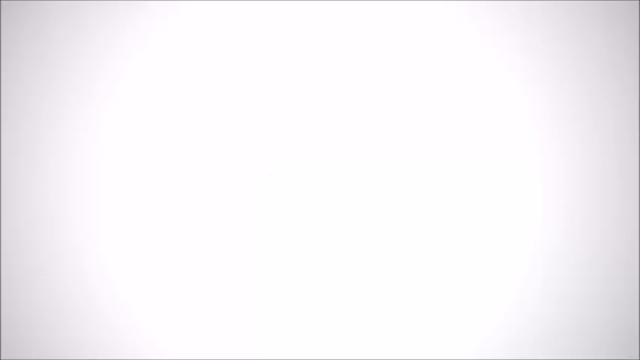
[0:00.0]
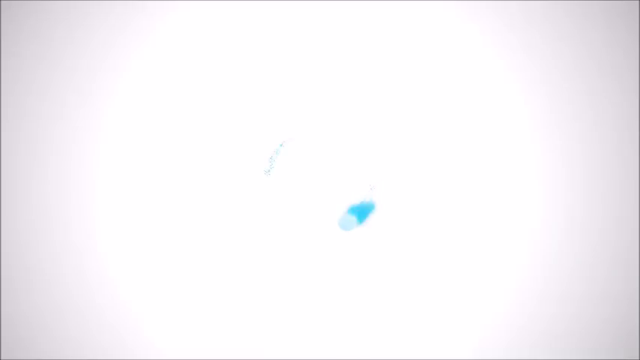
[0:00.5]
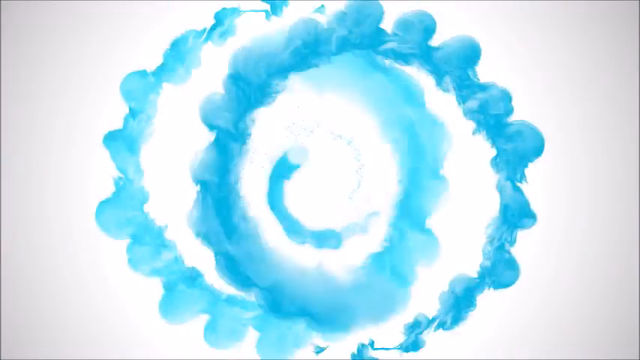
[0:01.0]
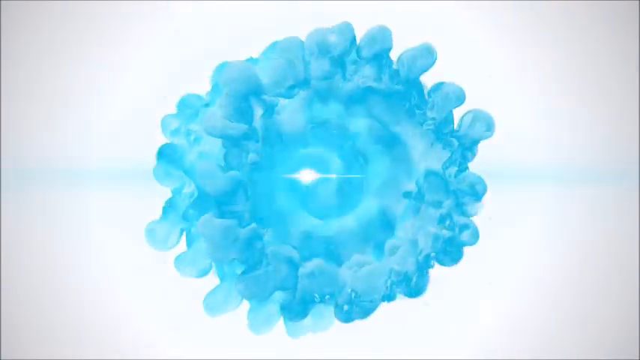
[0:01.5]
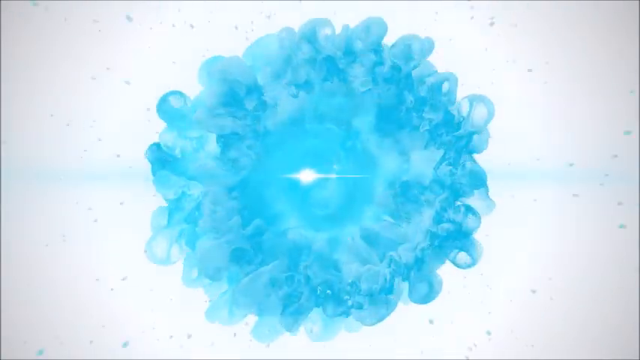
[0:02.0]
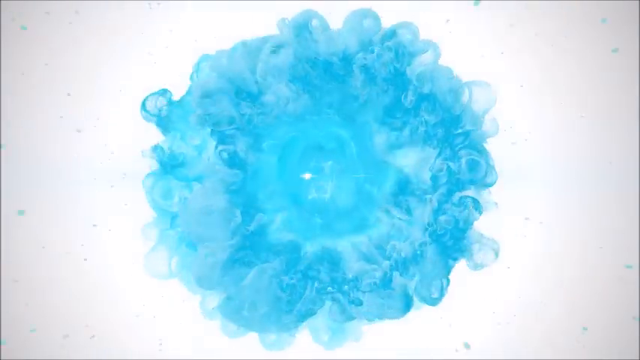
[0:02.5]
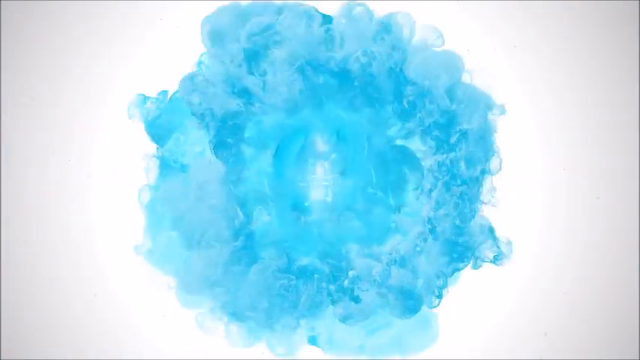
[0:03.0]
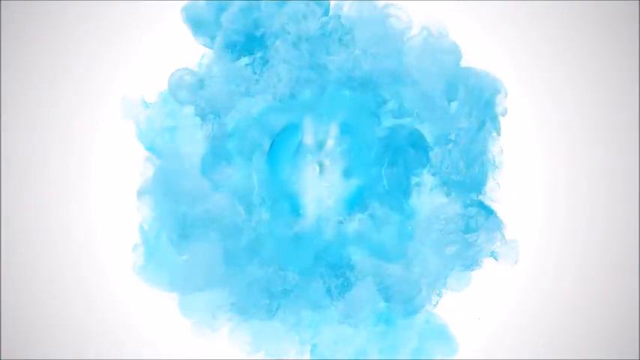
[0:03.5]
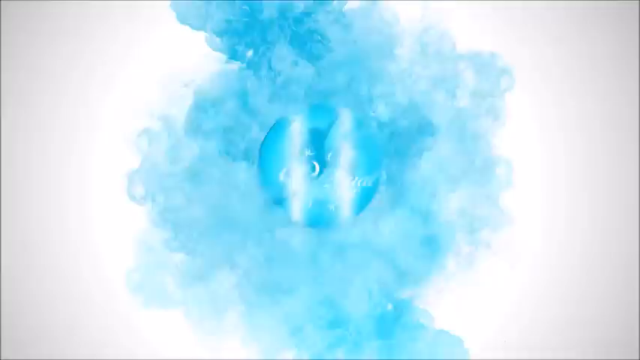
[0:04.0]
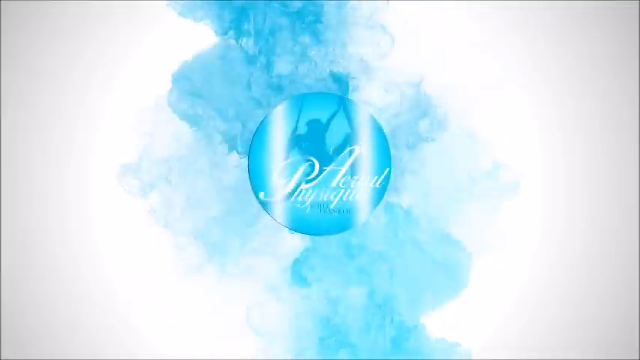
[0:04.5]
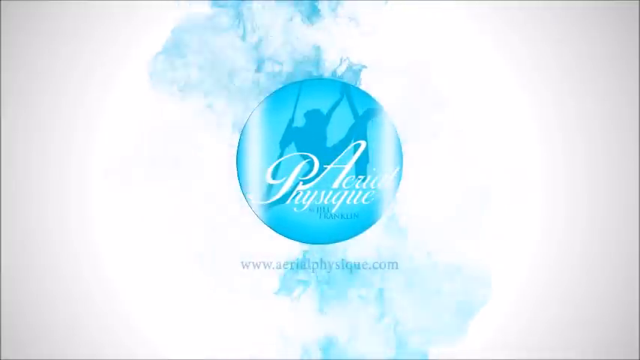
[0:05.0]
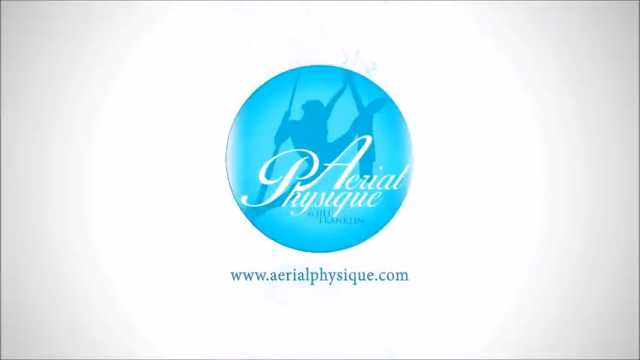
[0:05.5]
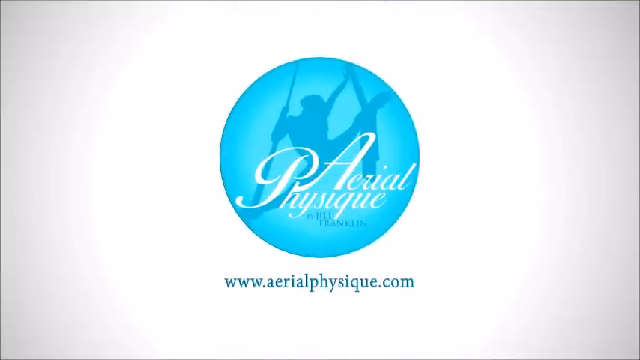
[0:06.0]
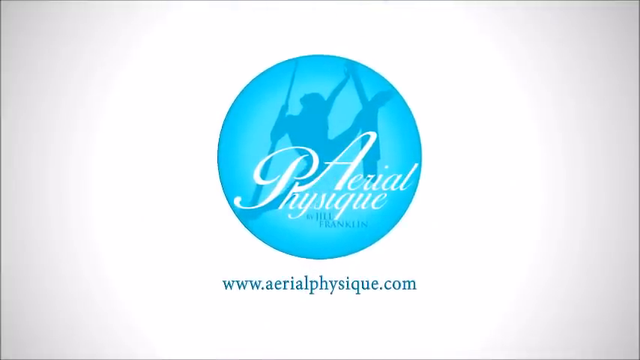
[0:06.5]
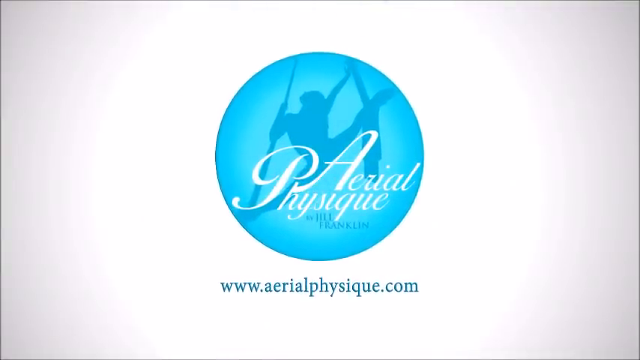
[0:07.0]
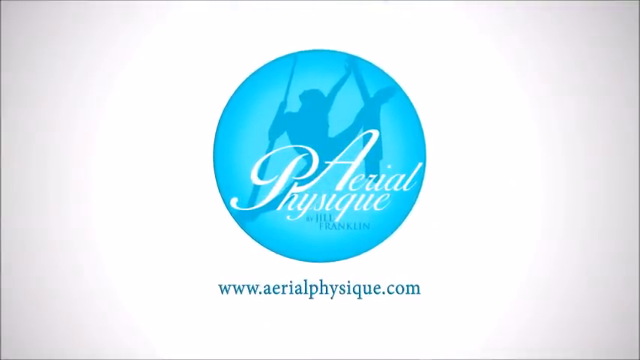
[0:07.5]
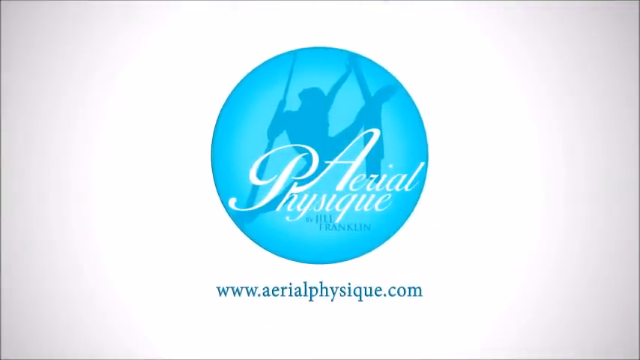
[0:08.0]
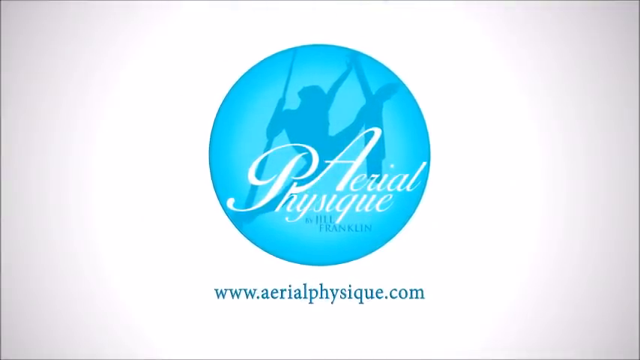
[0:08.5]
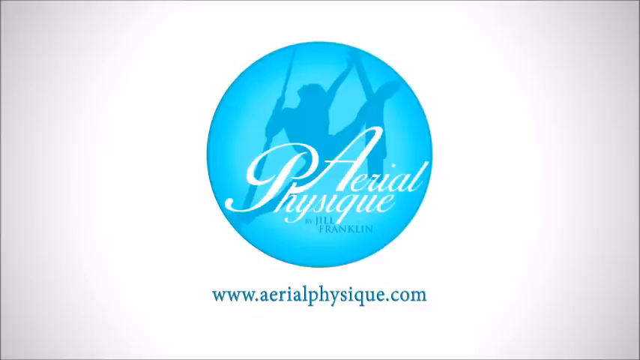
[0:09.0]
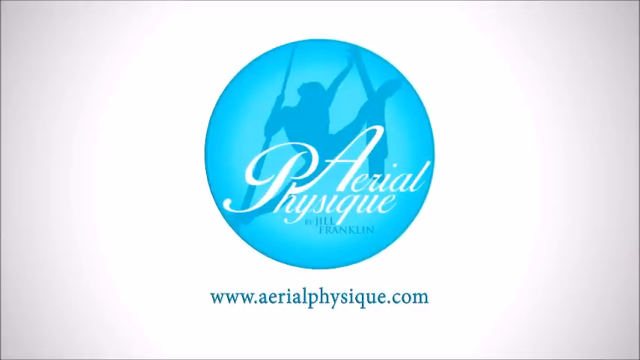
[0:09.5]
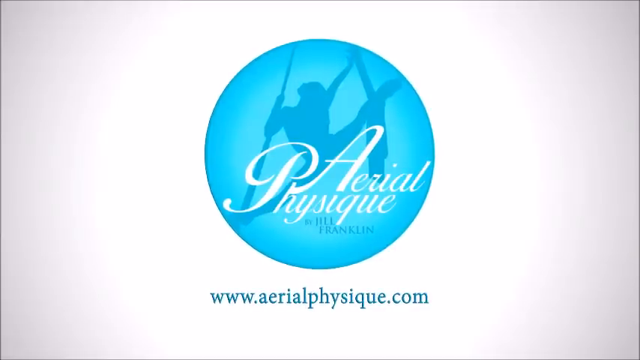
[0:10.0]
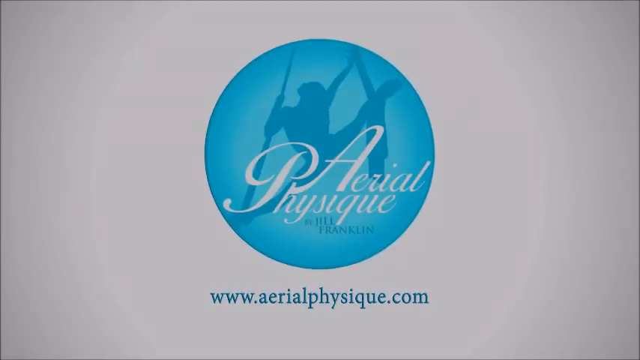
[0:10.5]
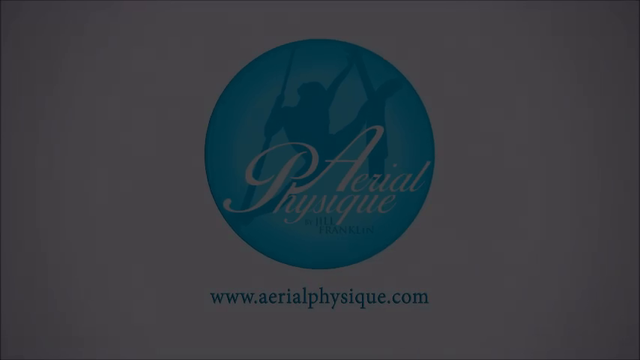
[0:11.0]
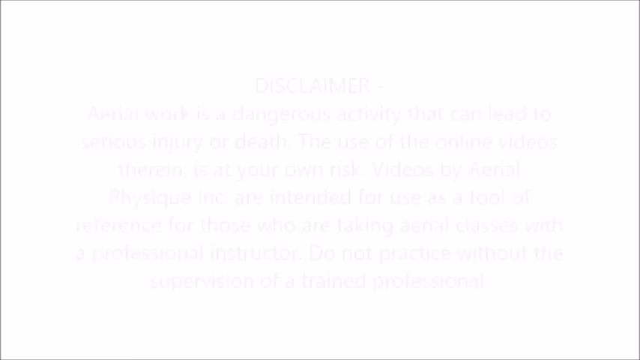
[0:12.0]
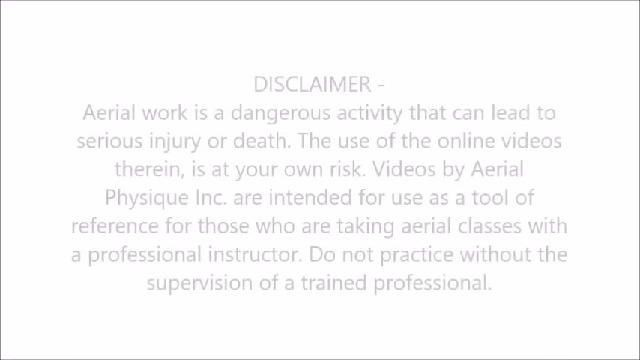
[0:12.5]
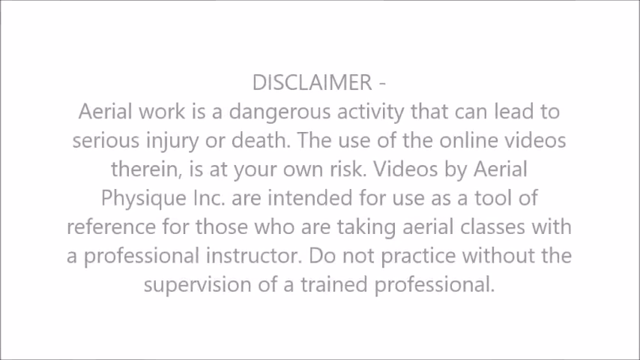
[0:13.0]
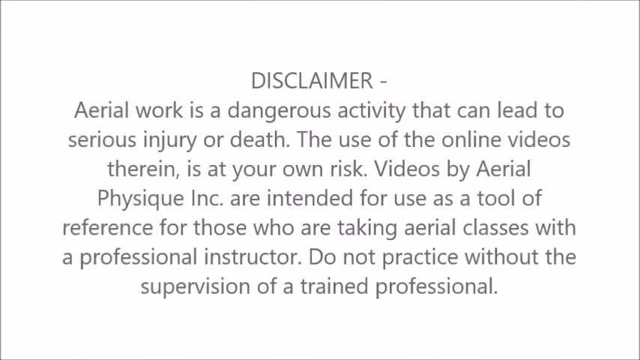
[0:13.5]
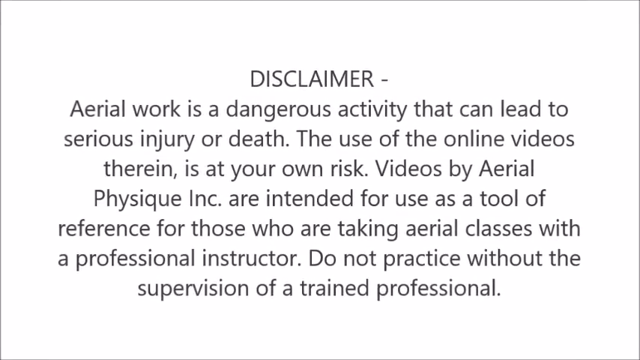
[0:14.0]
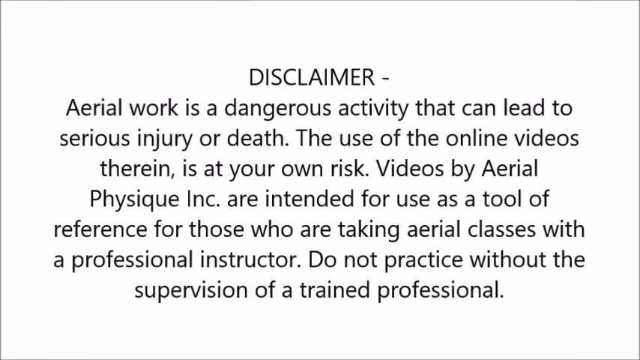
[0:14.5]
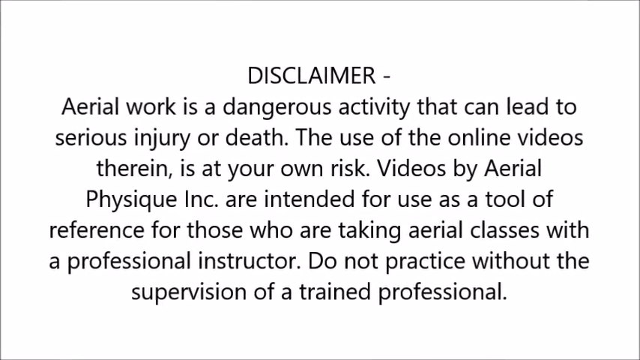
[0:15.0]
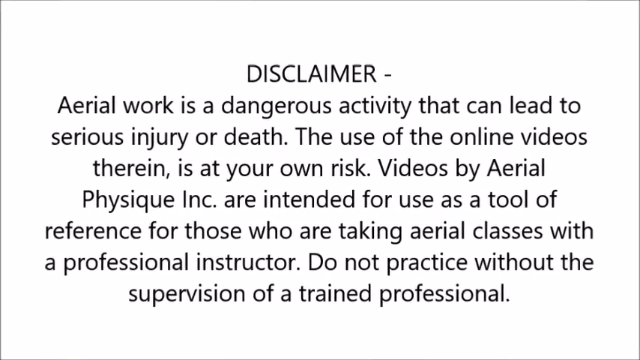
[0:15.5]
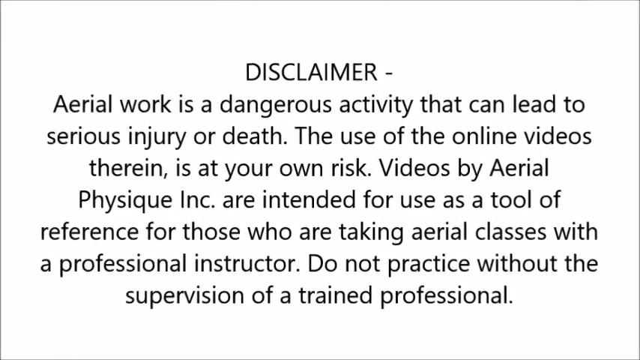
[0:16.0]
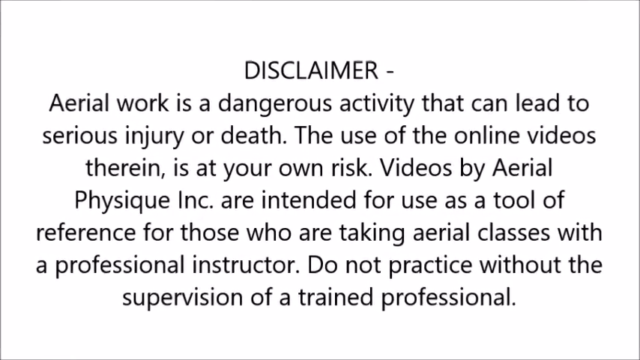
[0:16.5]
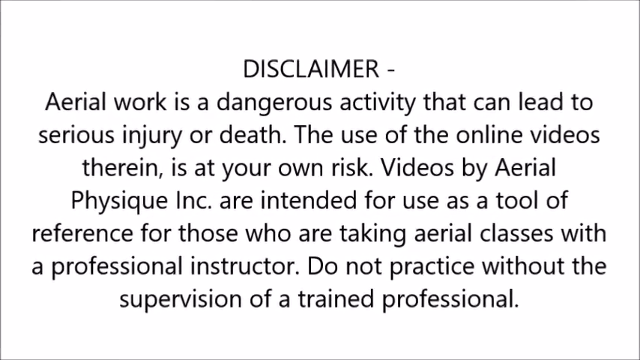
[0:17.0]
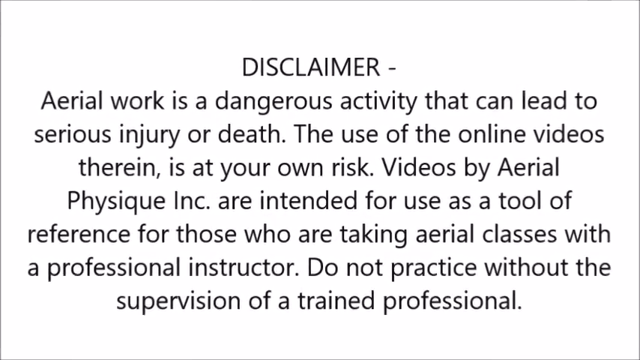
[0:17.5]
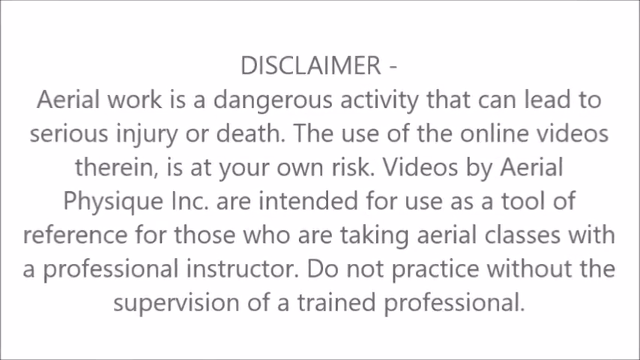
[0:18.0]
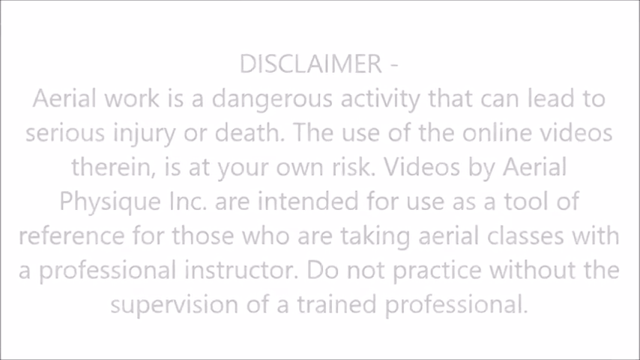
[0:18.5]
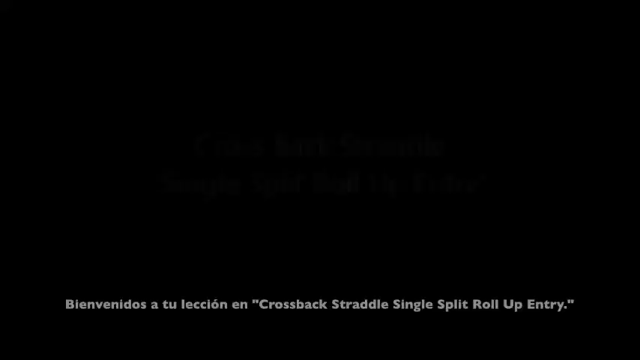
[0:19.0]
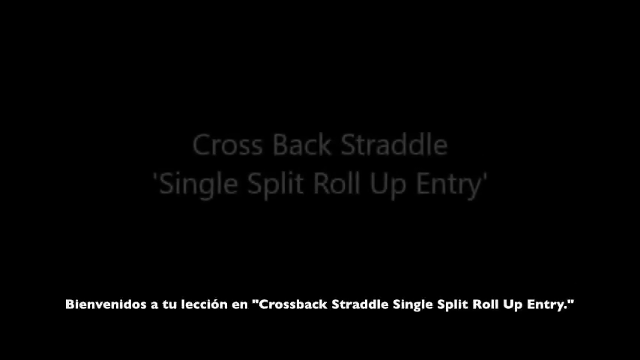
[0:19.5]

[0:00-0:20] The video opens on a blank black-white screen, and then blue moving colors come in, followed by a kind of aerial shot of a silhouette in a circle. Text reads "aerial physique" and "by Jill Franklin," and underneath is the website "www.aerialphysique.com." As the image gets a little bigger, it fades out to an all-black screen. A white screen then appears with a disclaimer in black font: "aerial work is a dangerous activity that can lead to serious injury or death the use of the online videos therein is at your own risk videos by aerial physique incorporated are intended for use as a tool of reference for those who are taking aerial classes with a professional instructor do not practice without the supervision of a trained professional." The words then seem to grow bigger as the view zooms in. Next, white text on a black background reads "cross back straddle" and, in quotes, "single split roll up entry," with text in another language at the bottom. The scene cuts to a woman grasping some long material that comes down, wrapping it around her legs. She wears what look like white yoga pants and a matching white sports bra with some coloring on them, mostly a kind of grayish purple and a light purple.